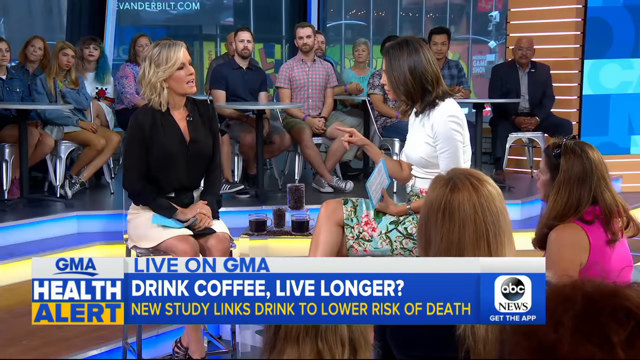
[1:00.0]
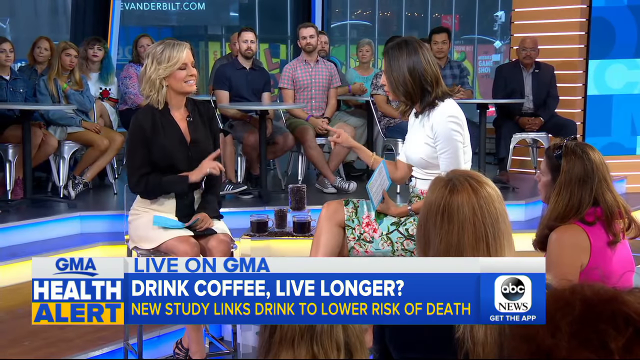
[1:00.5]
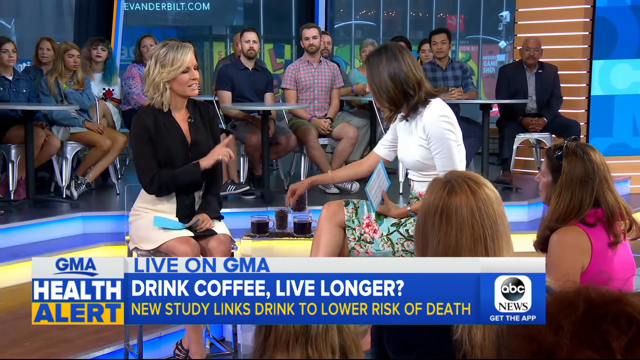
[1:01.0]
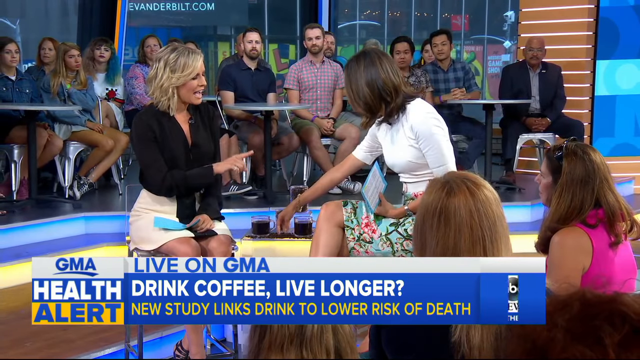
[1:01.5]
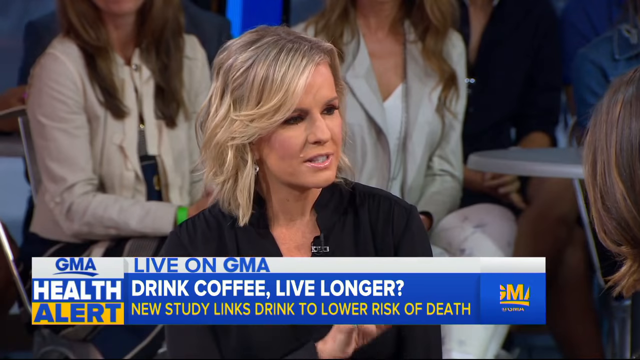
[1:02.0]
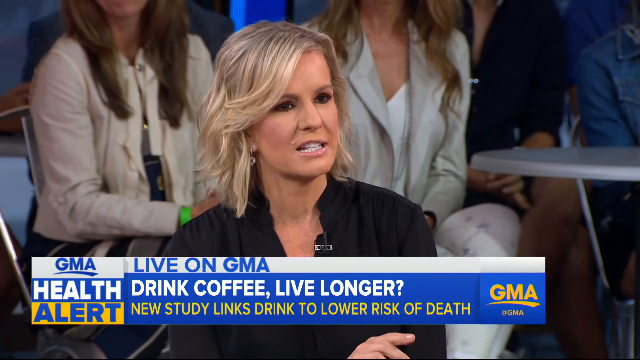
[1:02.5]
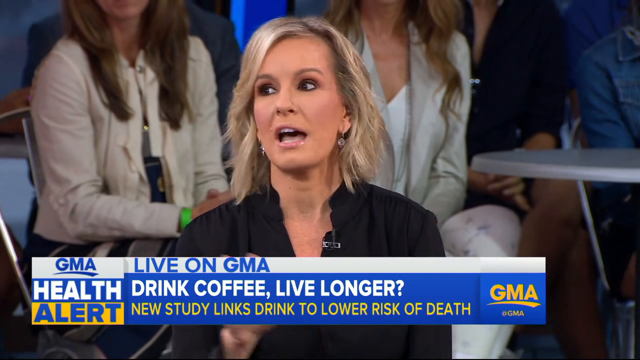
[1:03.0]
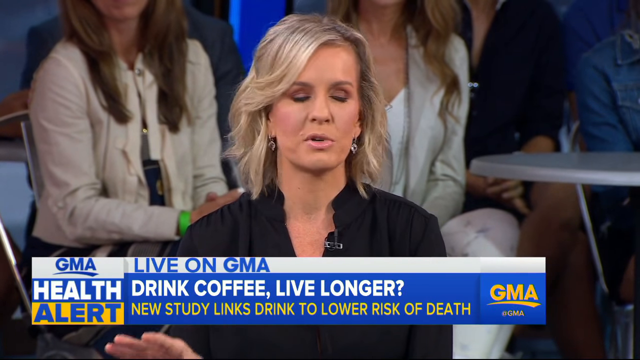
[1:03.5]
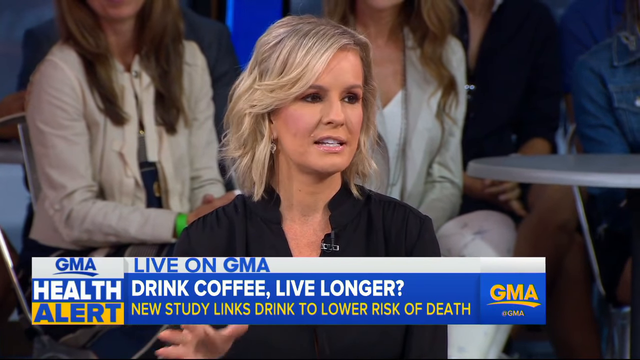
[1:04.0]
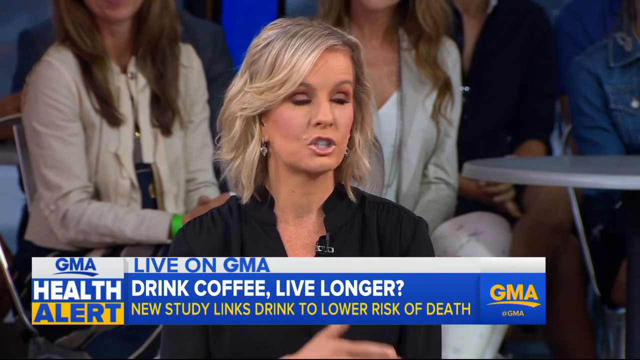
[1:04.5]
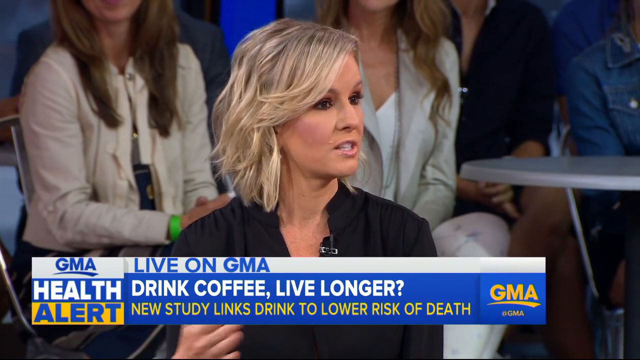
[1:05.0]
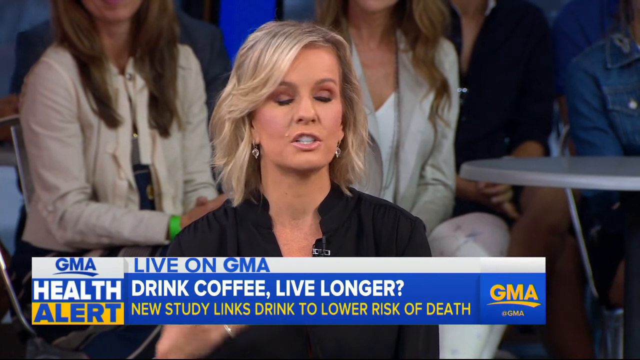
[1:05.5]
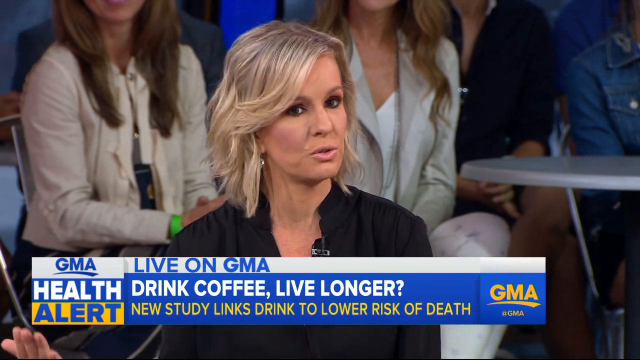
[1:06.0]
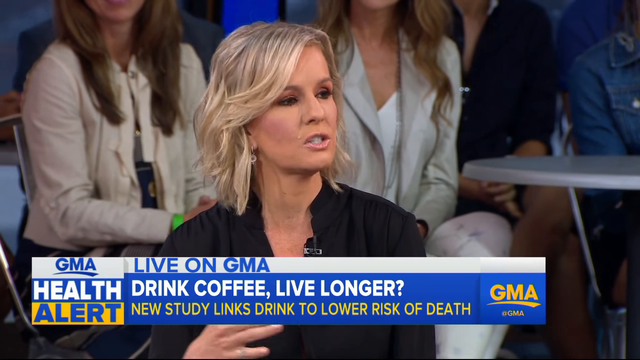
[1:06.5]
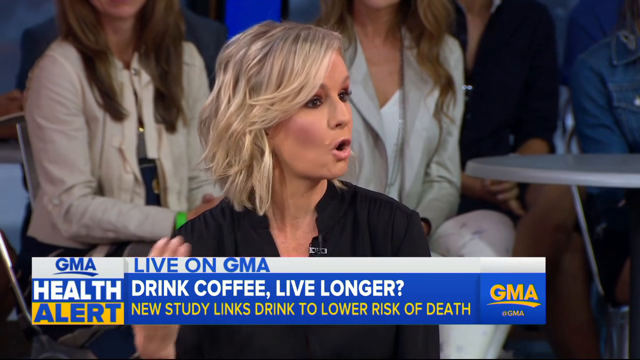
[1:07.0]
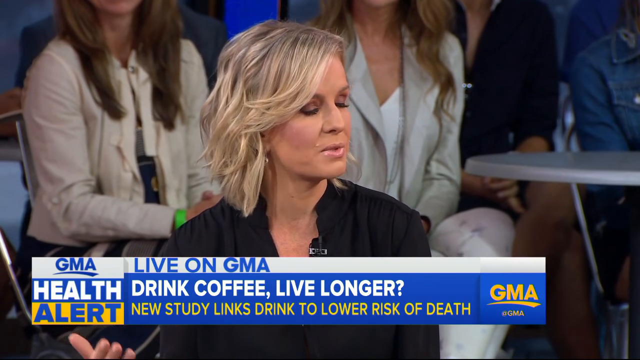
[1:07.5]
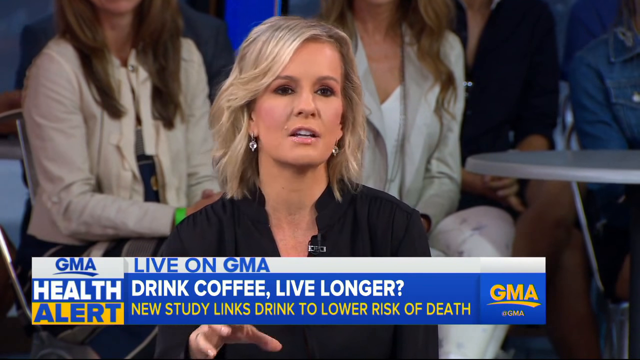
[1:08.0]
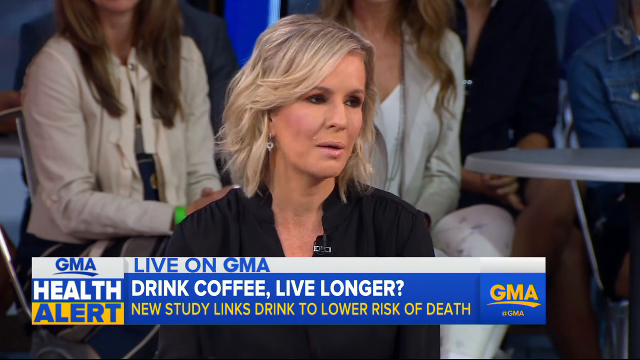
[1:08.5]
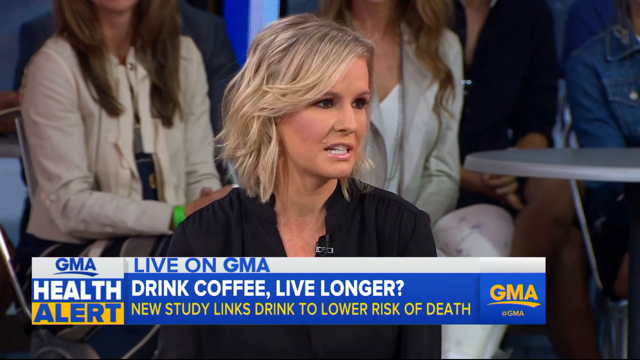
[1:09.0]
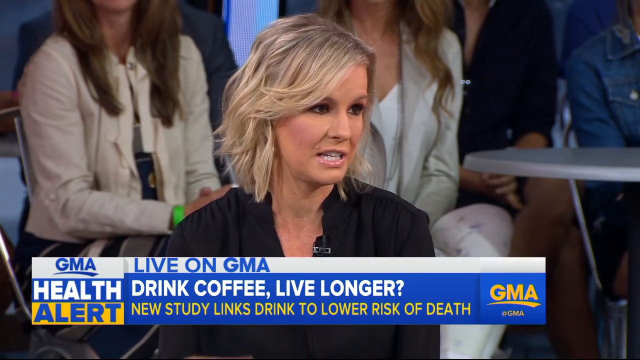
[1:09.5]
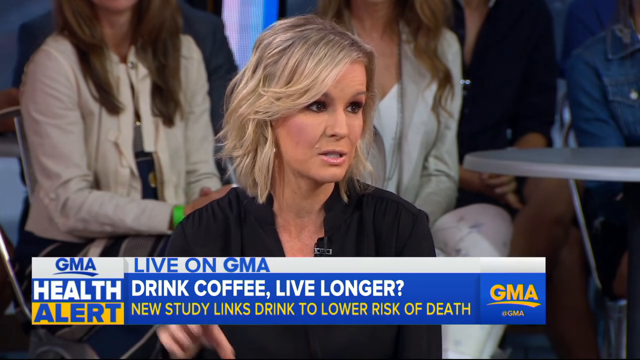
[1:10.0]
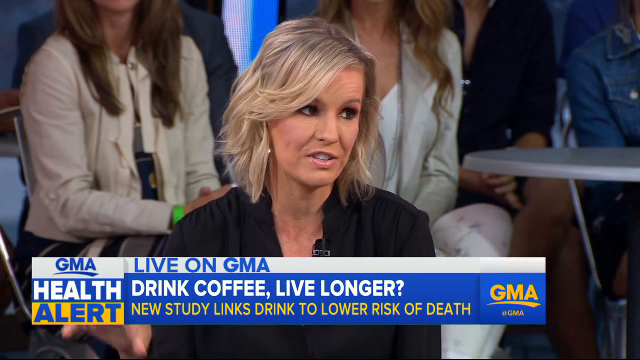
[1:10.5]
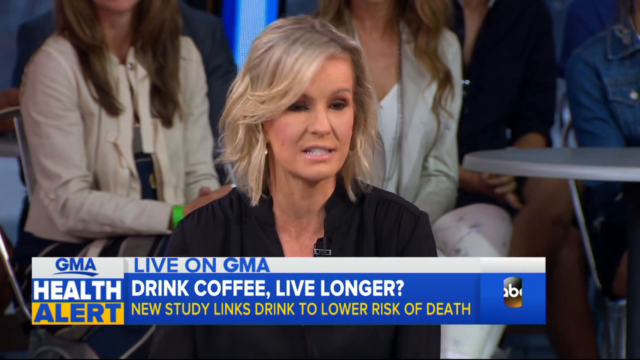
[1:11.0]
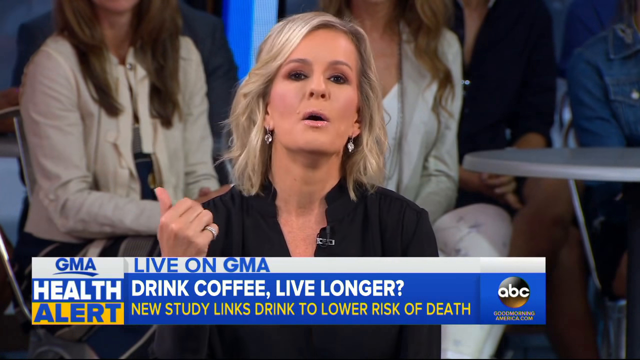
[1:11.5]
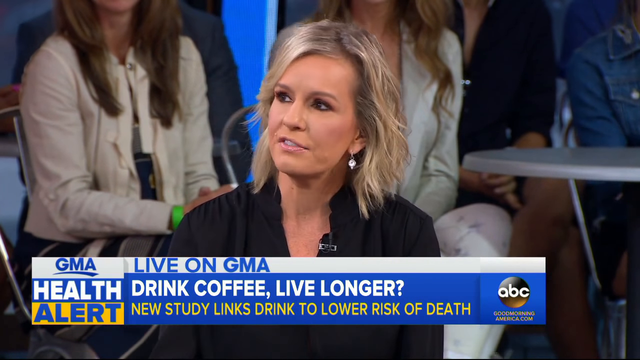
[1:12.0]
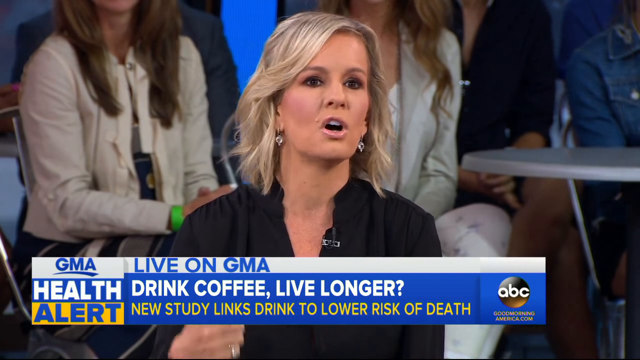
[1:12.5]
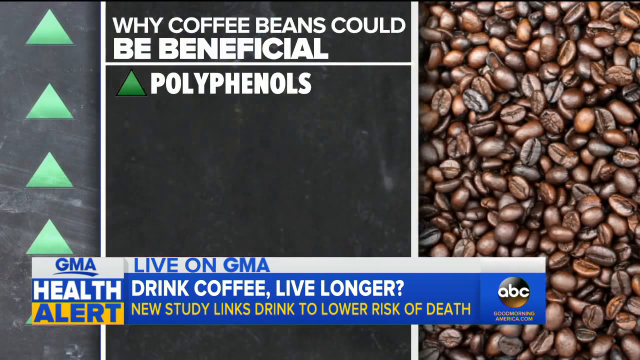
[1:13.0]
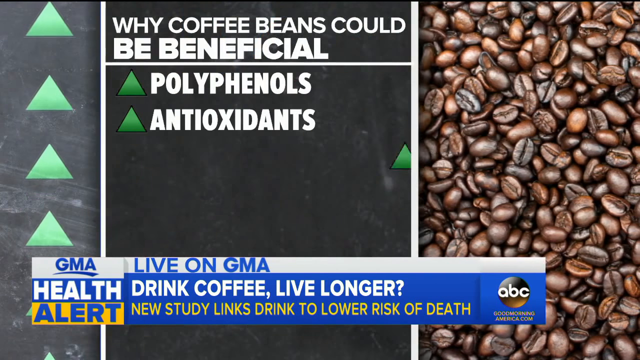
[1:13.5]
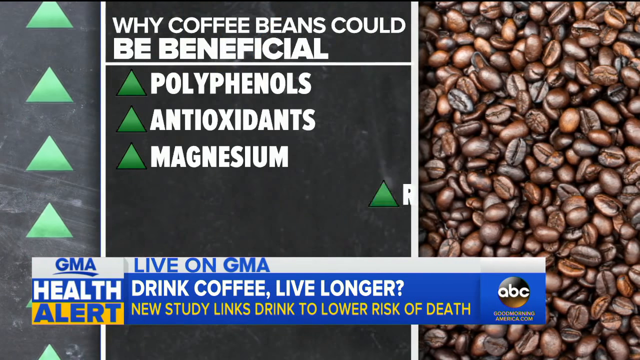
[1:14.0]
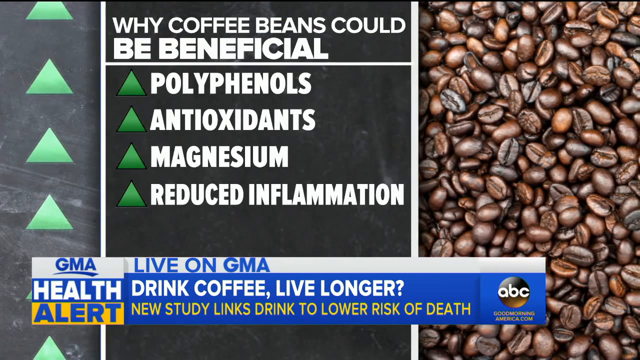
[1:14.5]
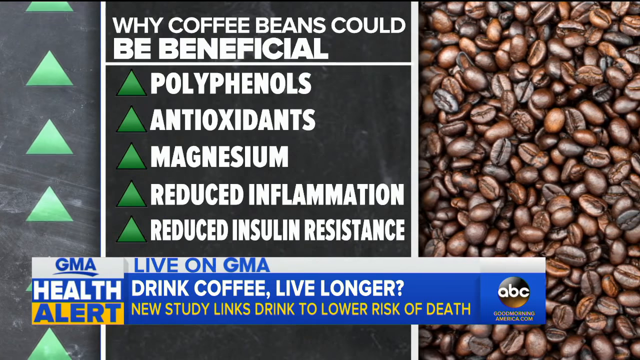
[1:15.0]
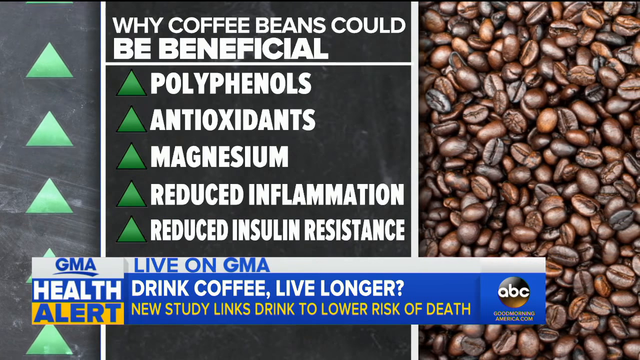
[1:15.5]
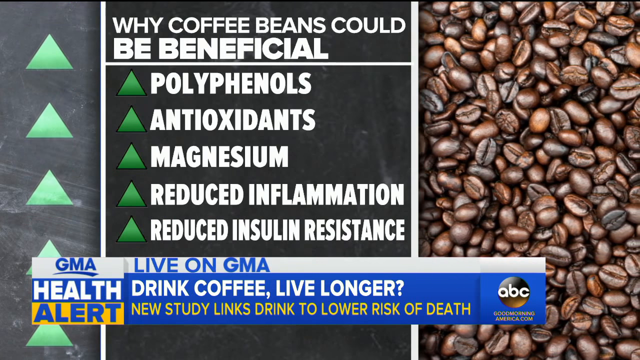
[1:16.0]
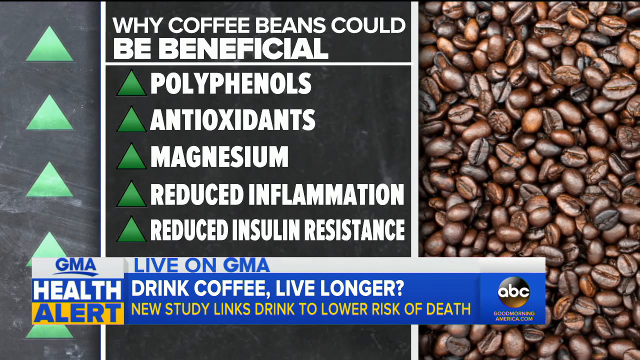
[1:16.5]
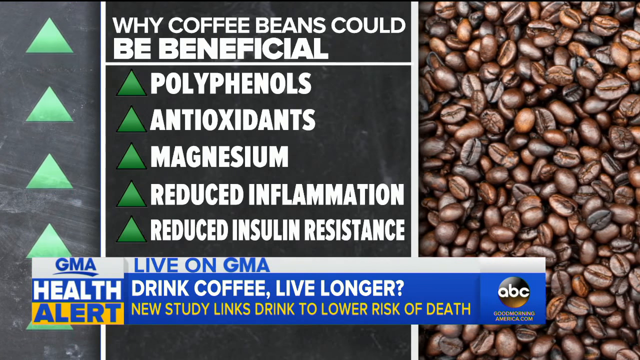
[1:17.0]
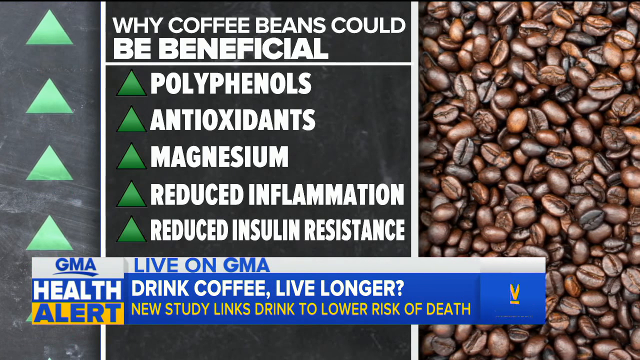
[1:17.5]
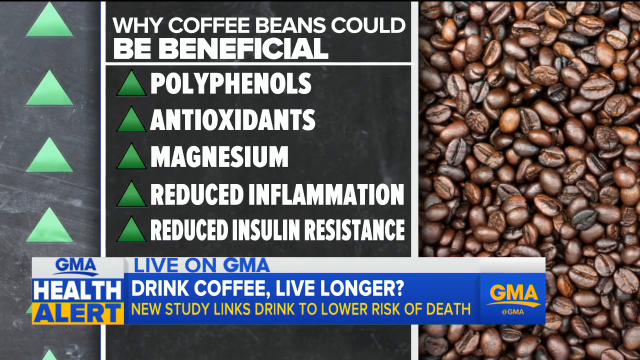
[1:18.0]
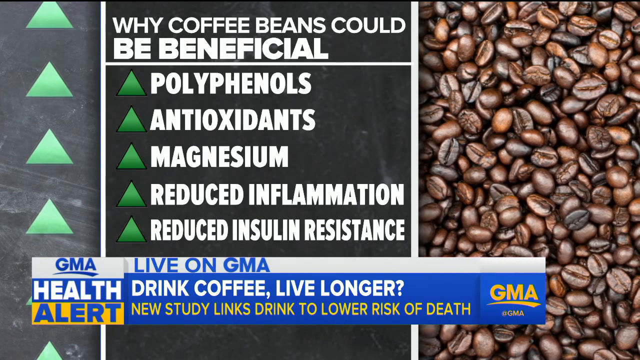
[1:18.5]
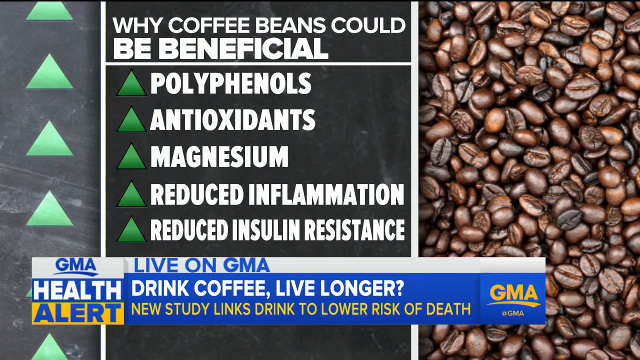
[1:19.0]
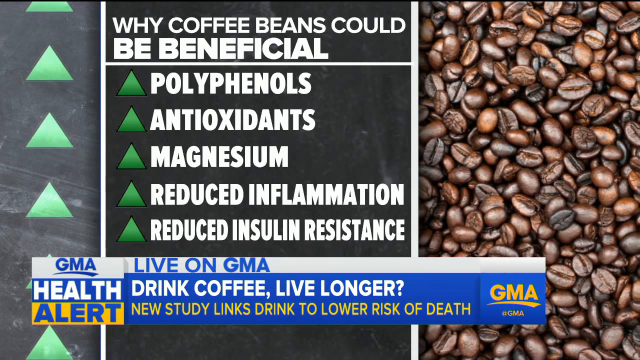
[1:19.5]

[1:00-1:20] A screen with coffee beans is shown as Dr. Jennifer presents on why coffee beans could be beneficial, listing polyphenols, antioxidant, magnesium, reduced inflammation and reduced insulin resistance. While presenting, she moves her hands up and down to demonstrate her points.